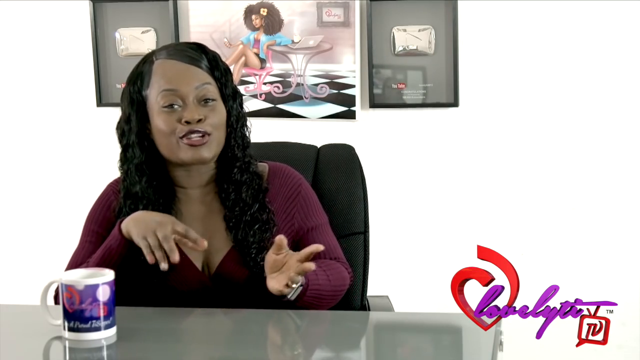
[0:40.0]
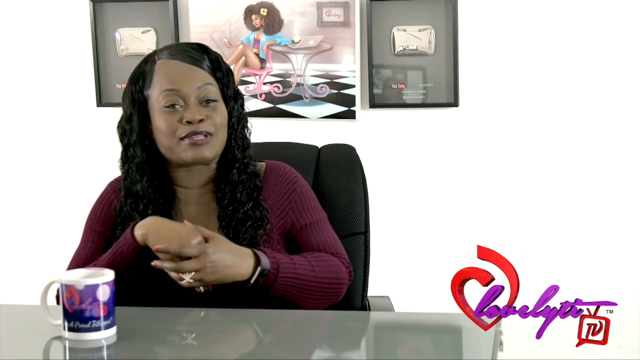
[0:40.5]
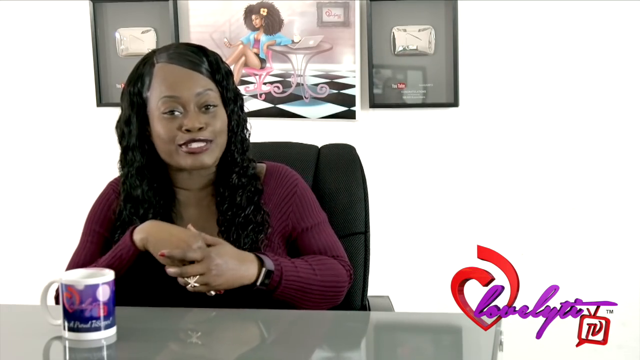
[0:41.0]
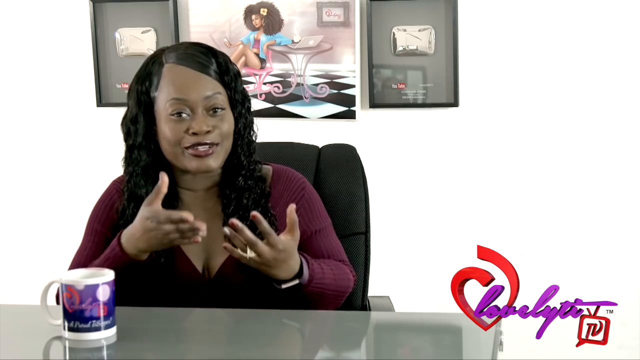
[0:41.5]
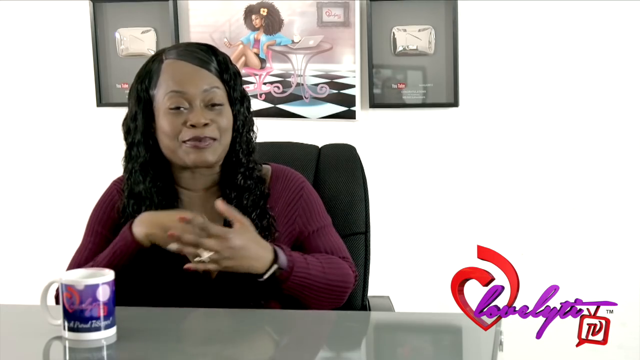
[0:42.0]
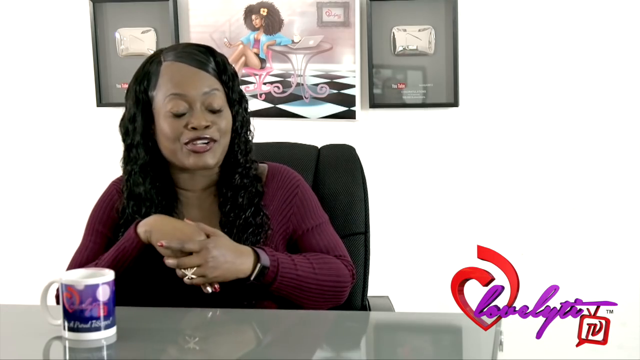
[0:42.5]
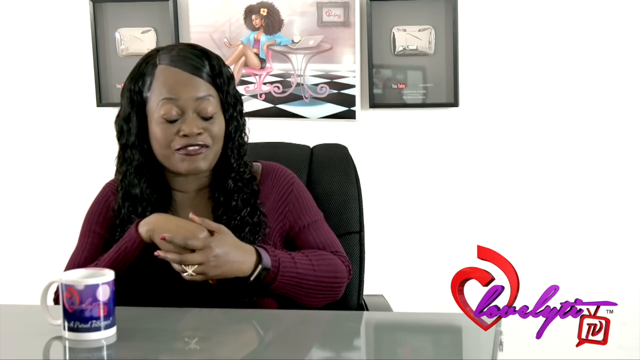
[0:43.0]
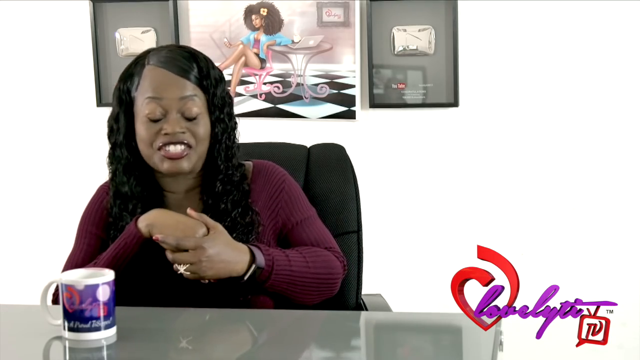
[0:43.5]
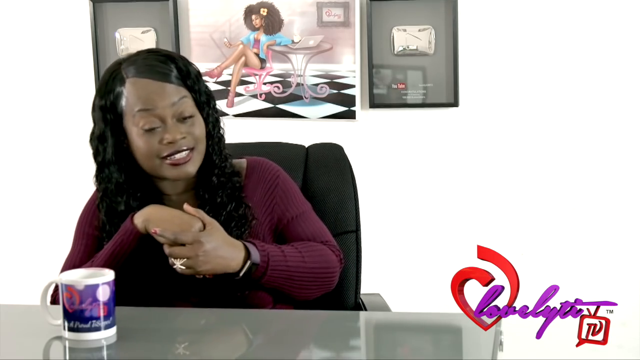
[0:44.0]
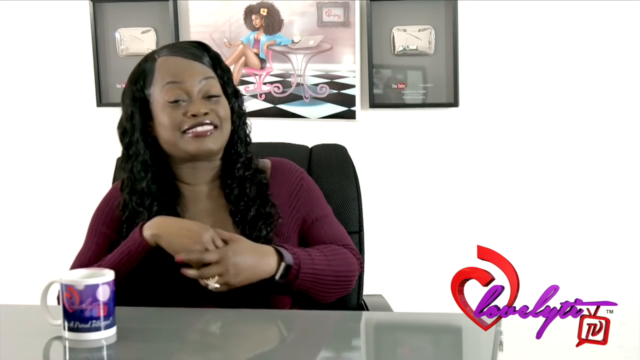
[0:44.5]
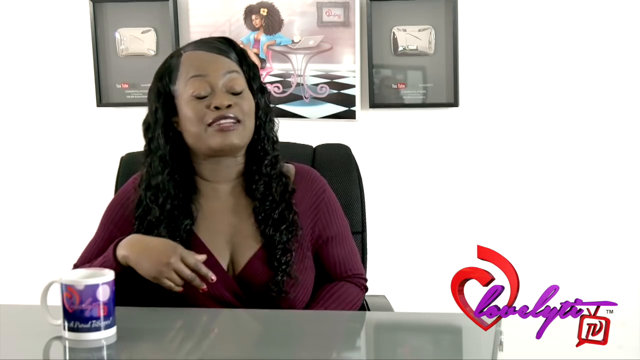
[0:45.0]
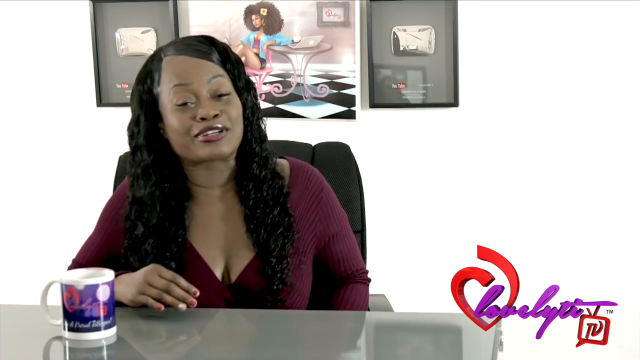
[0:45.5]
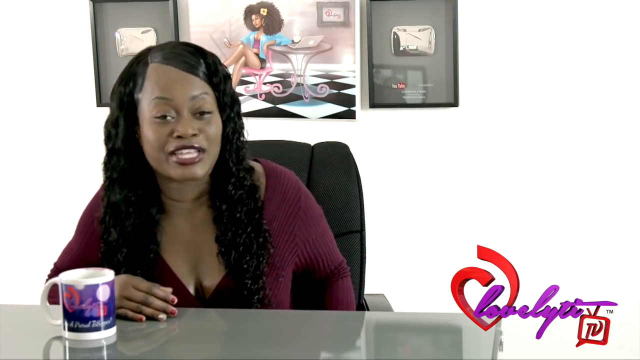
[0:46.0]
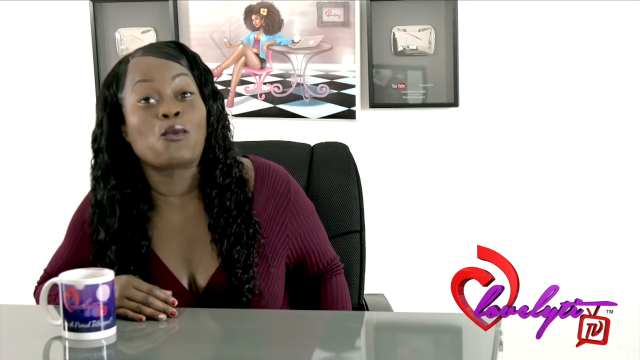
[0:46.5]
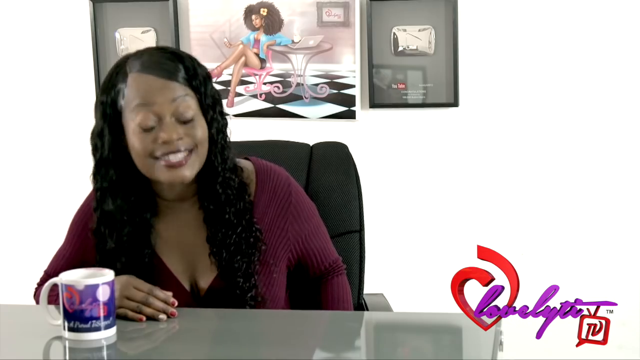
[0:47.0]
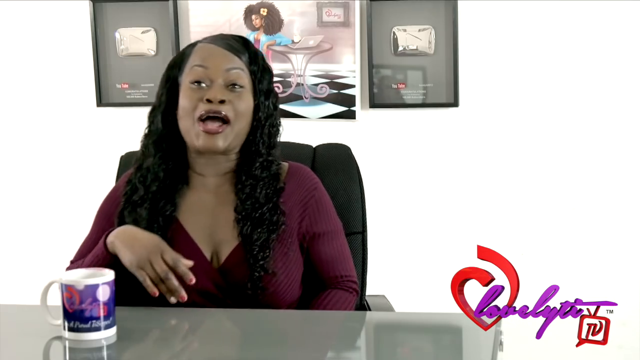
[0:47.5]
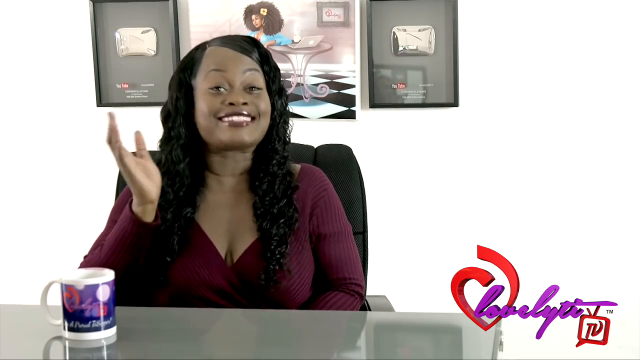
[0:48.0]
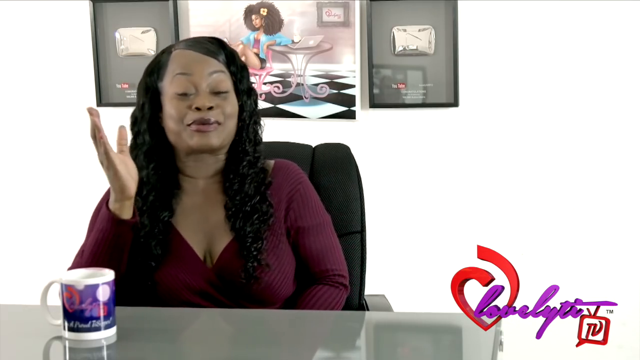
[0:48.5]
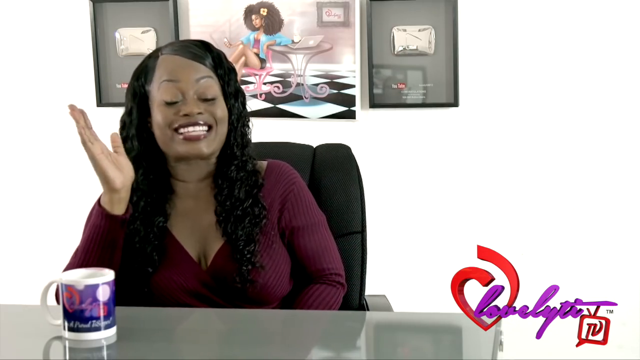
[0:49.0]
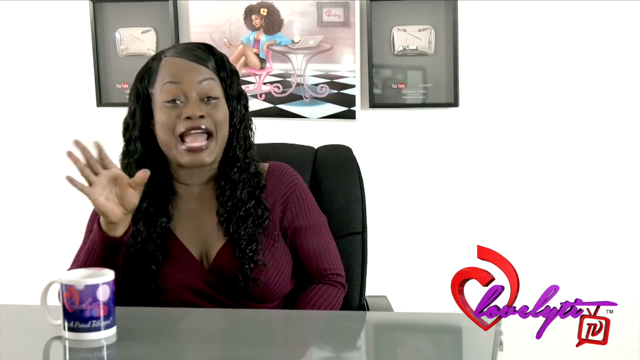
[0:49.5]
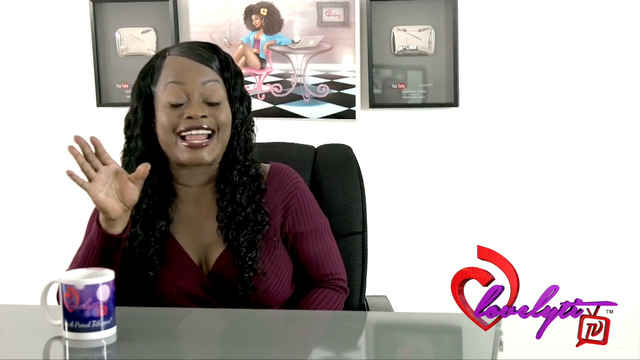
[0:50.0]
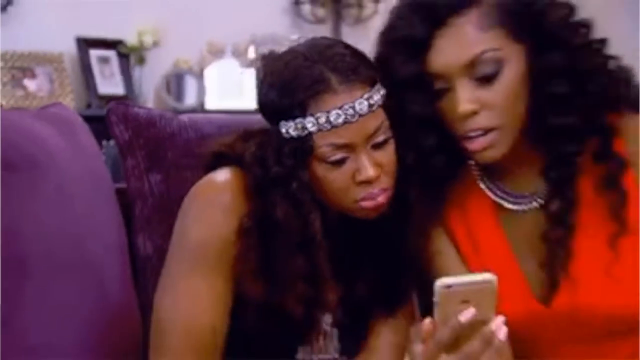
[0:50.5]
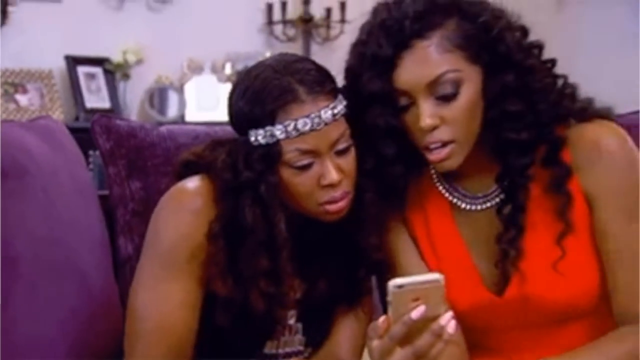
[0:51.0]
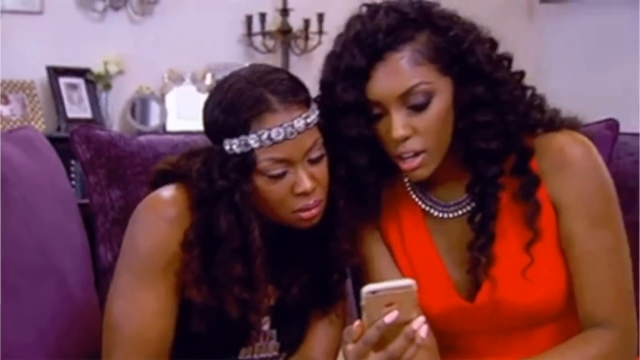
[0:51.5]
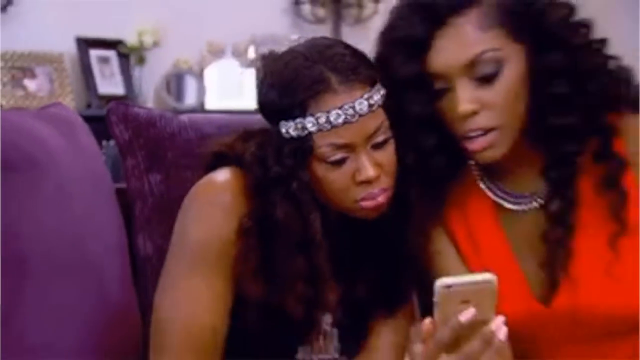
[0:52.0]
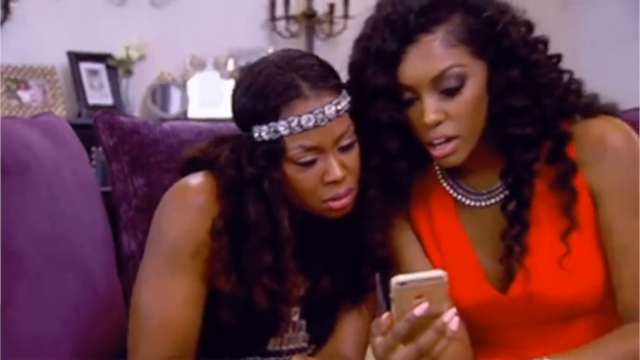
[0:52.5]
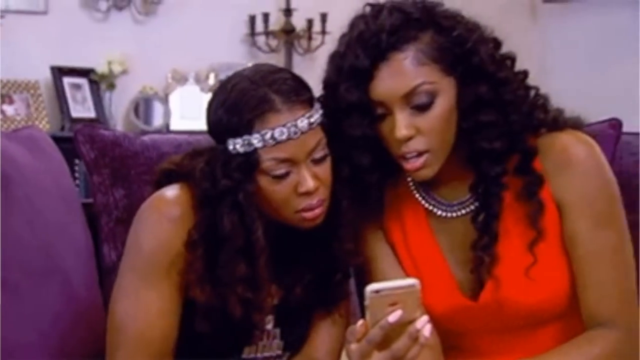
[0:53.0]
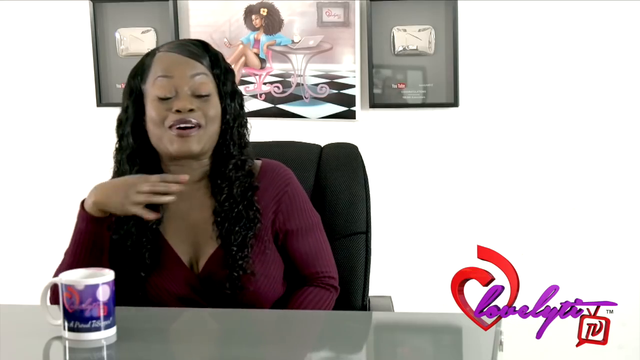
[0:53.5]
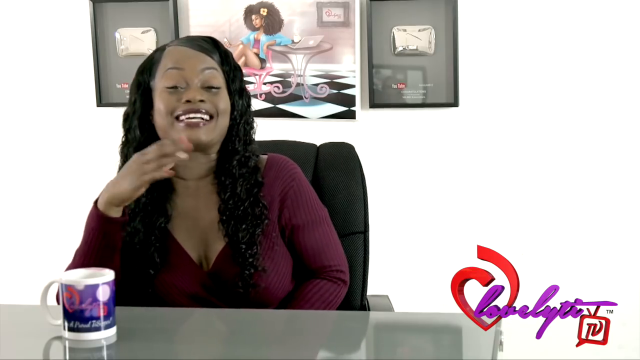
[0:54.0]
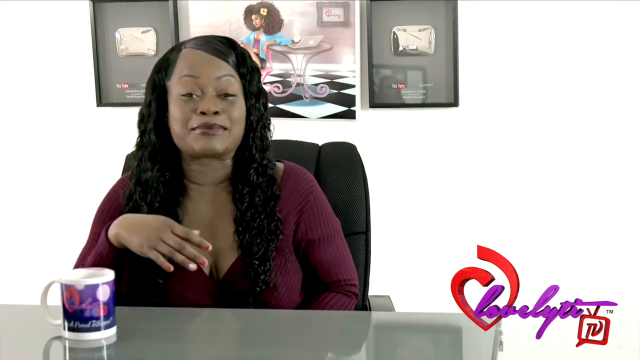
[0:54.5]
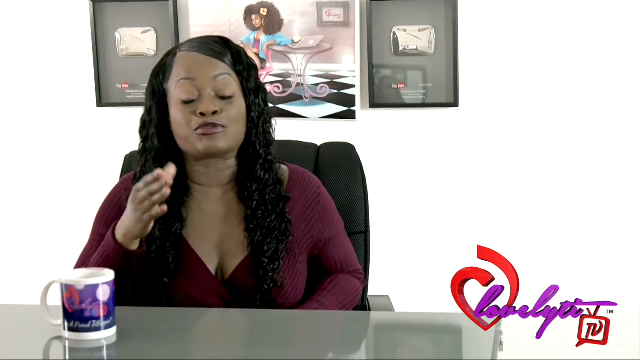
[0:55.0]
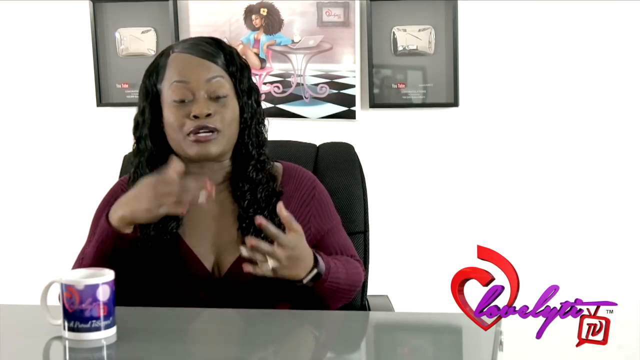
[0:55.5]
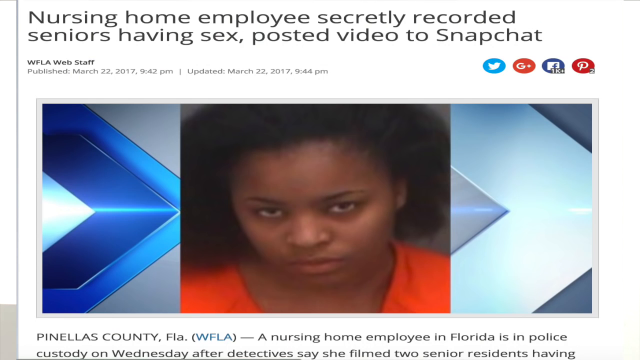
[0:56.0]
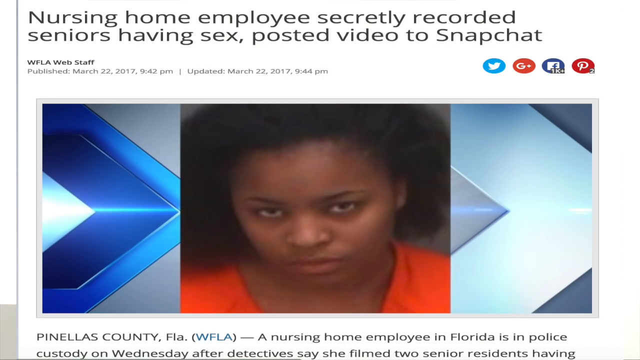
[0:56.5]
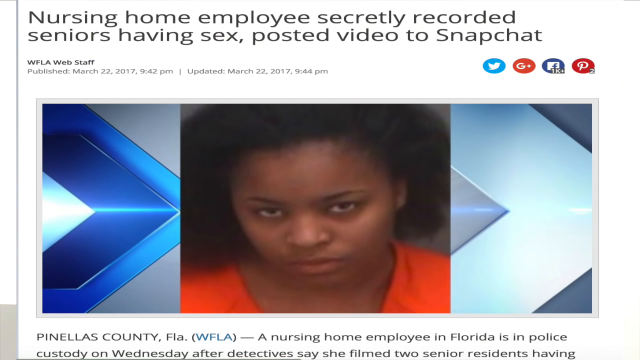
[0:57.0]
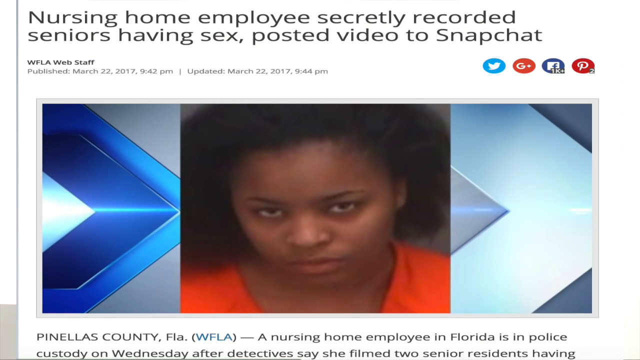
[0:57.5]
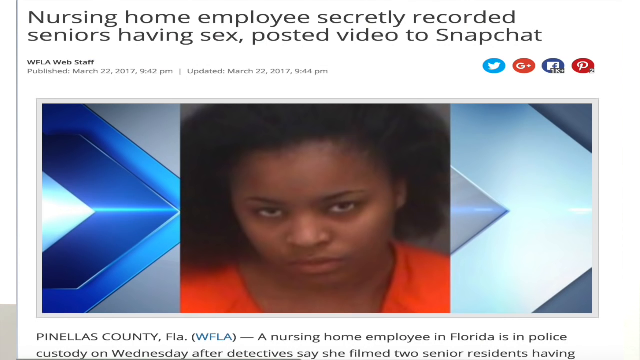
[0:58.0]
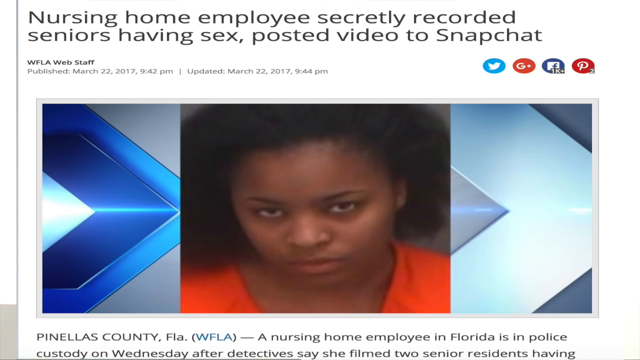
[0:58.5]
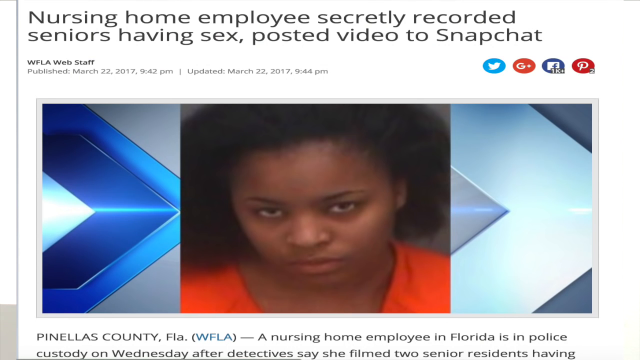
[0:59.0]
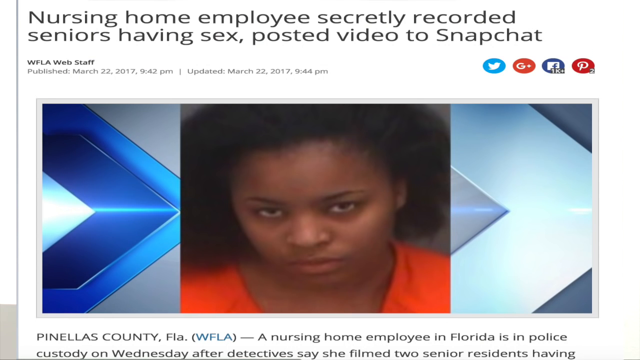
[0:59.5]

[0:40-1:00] The content creator still sits at her desk, apparently actively talking to her audience. Her arms are still bent at the elbow, but now her forearms are raised and her hands move from side to side. She brings her hands in, intertwines them, separates them, lowers her left arm to her side and keeps speaking. The scene changes to two ladies who appear to be looking down at a phone screen at some sort of gossip that shocks them. The video cuts back to the content creator, then quickly moves to a mugshot of a woman with a devilish expression; her eyes look dead, she is not smiling, and she looks straight ahead with a grimace. She wears an orange top, and at the top of the screen are the words "nursing home employees secretly recorded seniors having sex posted video on snapchat". The video returns to the content creator, who clasps her hands together, releases them, raises her palms, and keeps talking; she raises her arm with her hand turned on its side next to her face, showing her palm as she moves it around in a small circle and back and forth.